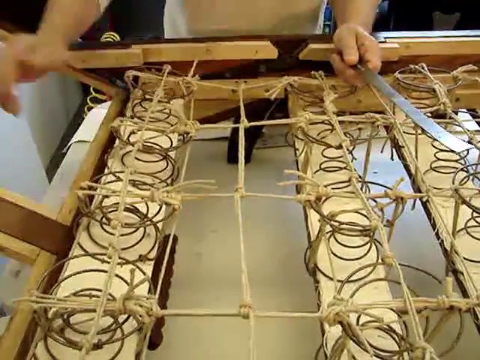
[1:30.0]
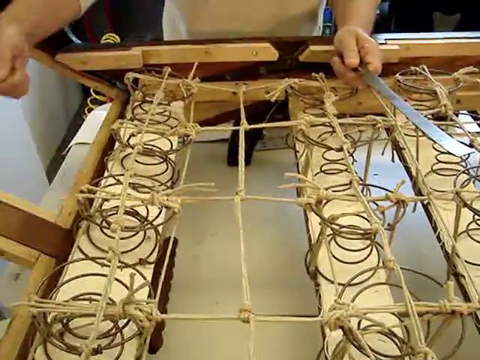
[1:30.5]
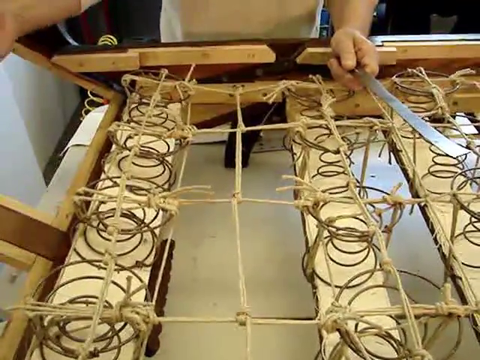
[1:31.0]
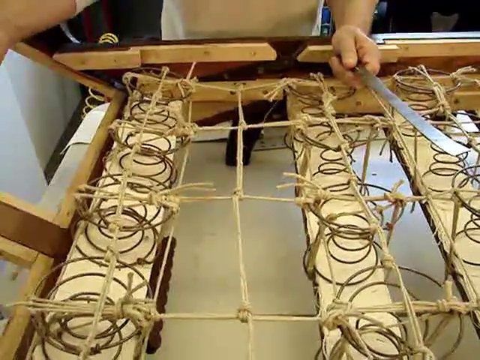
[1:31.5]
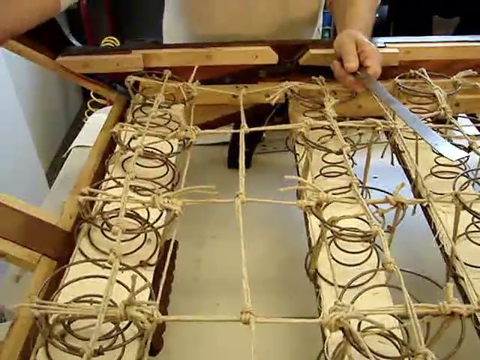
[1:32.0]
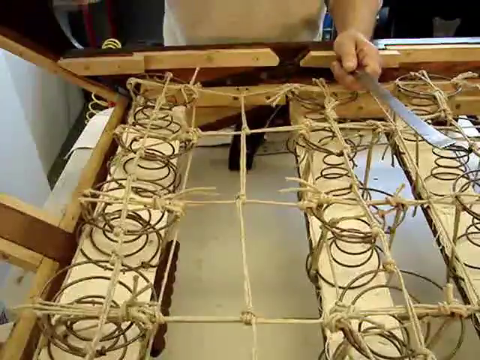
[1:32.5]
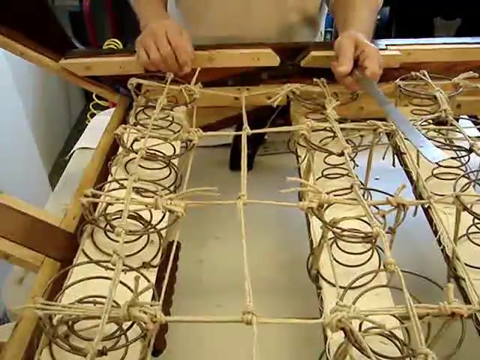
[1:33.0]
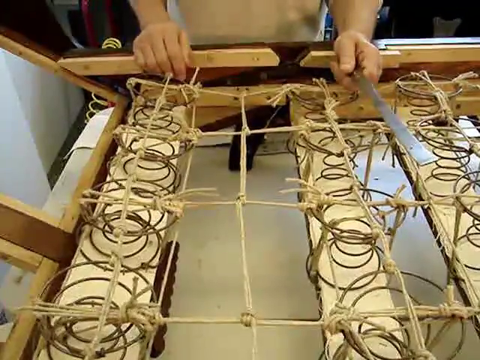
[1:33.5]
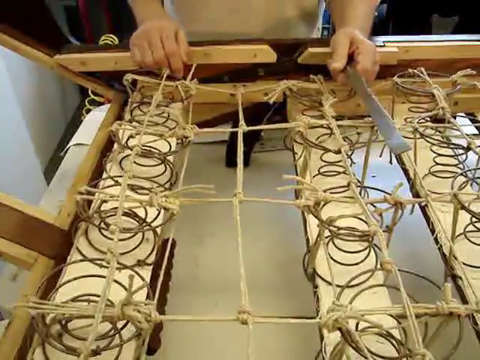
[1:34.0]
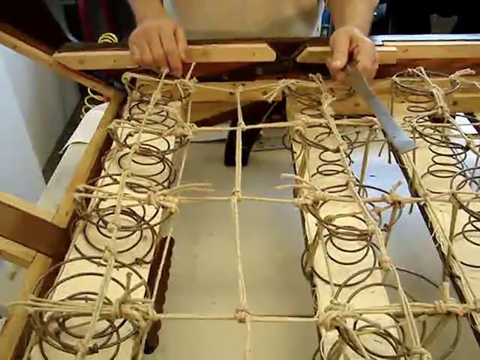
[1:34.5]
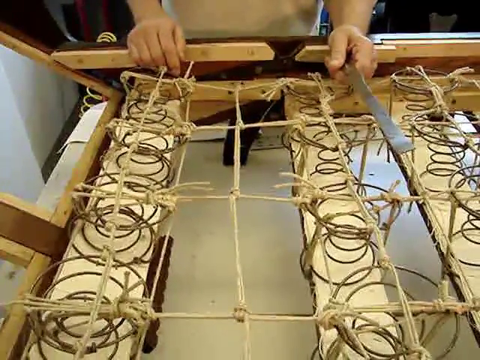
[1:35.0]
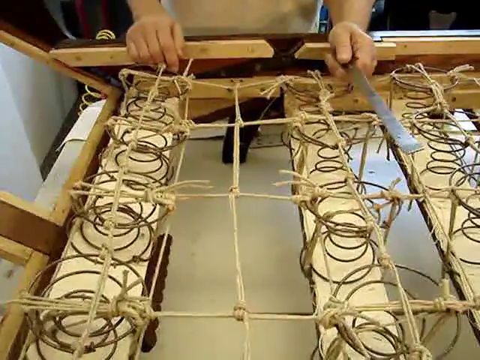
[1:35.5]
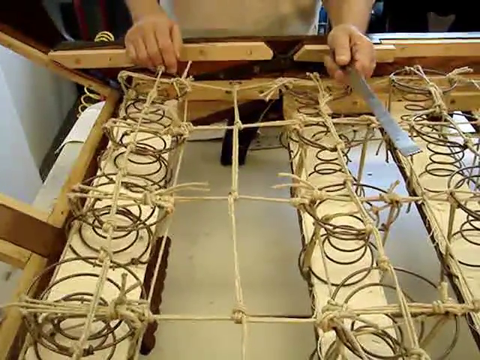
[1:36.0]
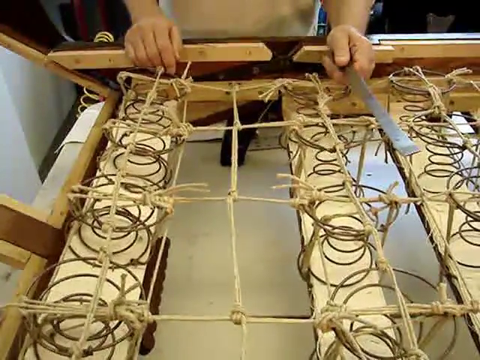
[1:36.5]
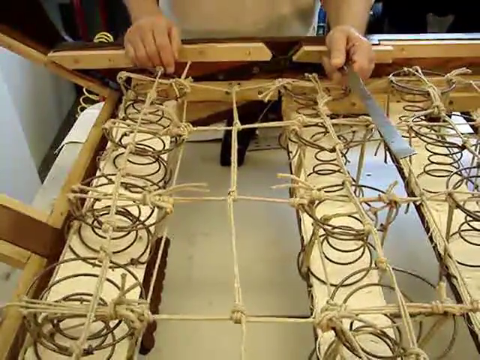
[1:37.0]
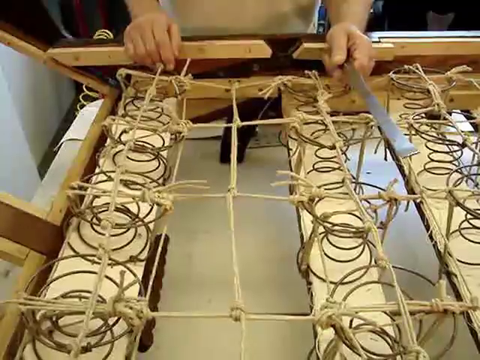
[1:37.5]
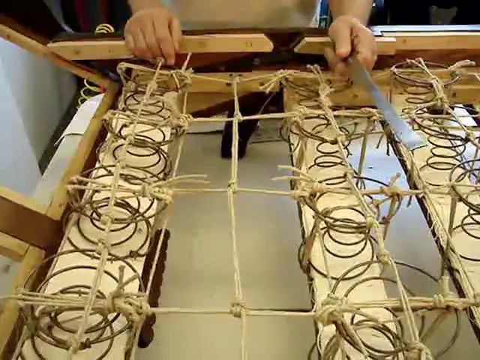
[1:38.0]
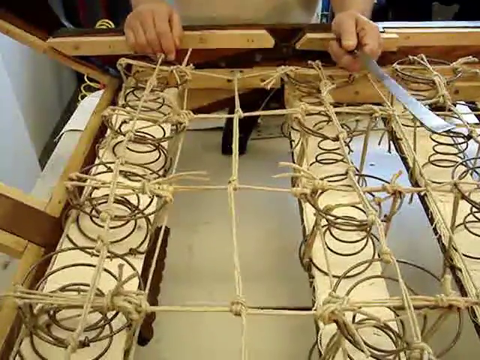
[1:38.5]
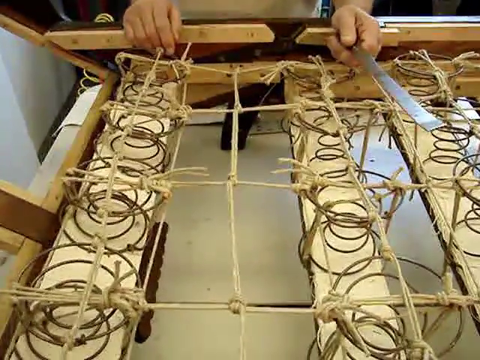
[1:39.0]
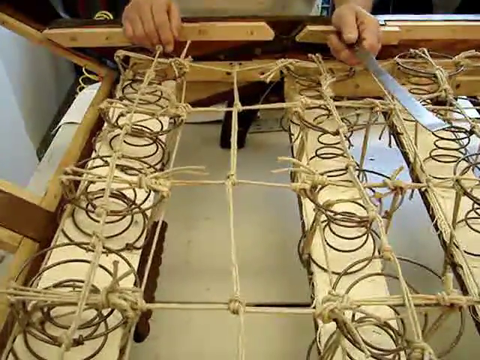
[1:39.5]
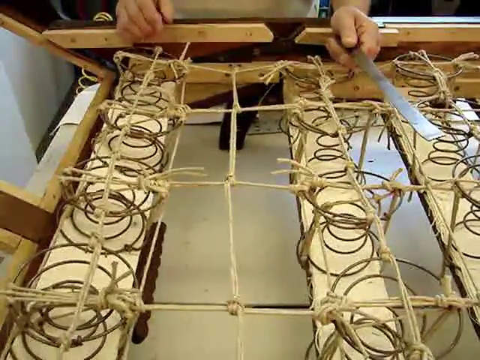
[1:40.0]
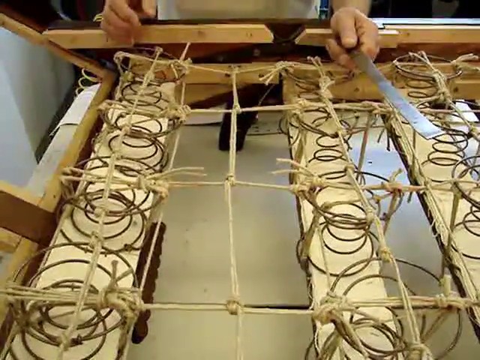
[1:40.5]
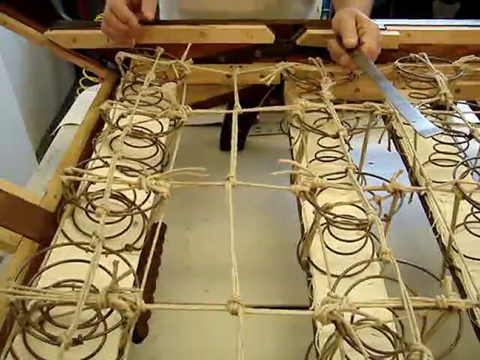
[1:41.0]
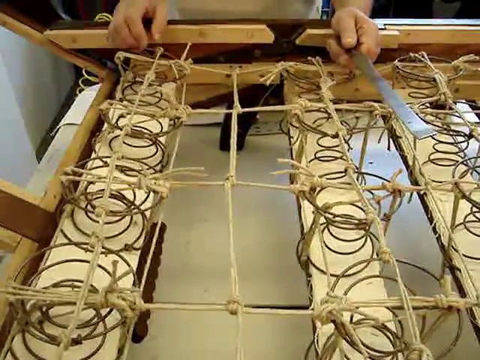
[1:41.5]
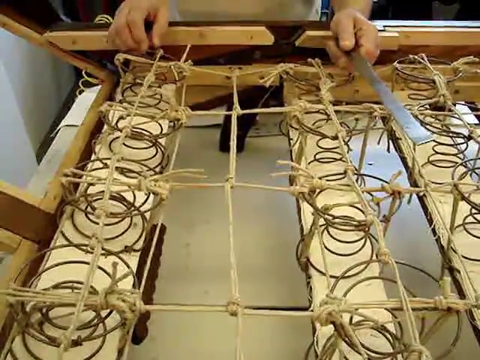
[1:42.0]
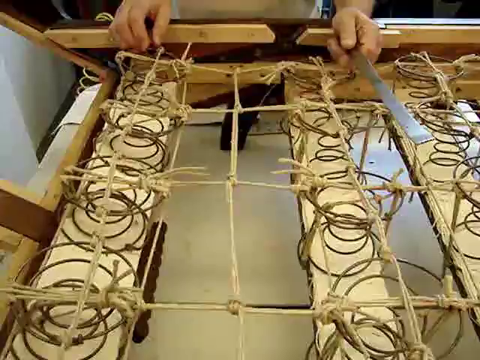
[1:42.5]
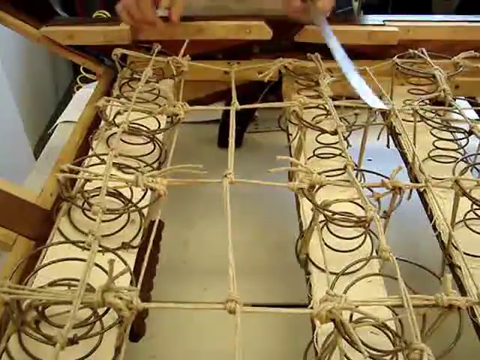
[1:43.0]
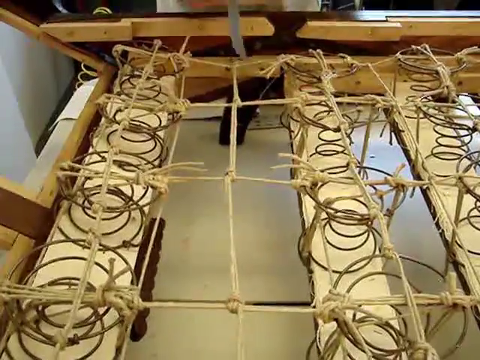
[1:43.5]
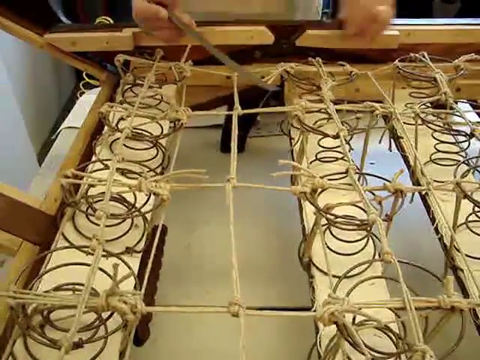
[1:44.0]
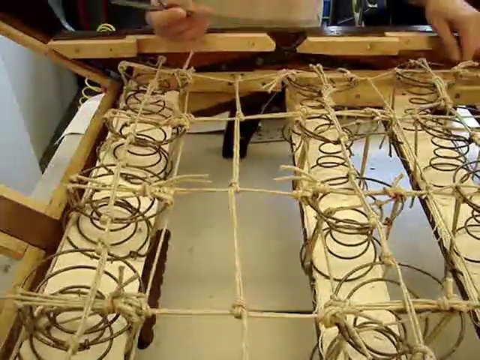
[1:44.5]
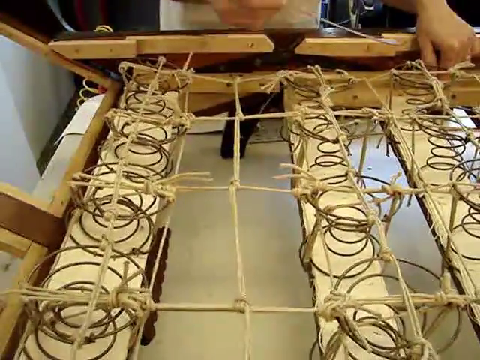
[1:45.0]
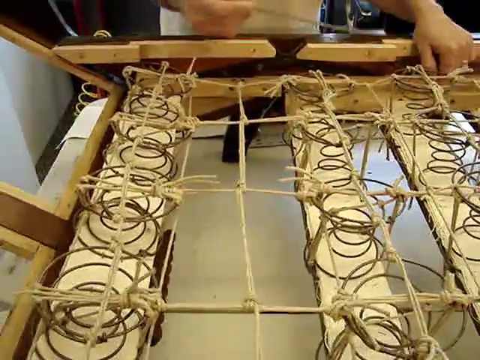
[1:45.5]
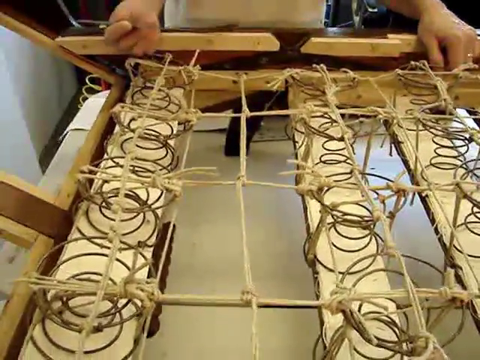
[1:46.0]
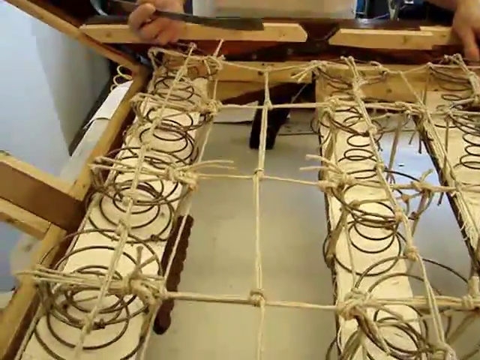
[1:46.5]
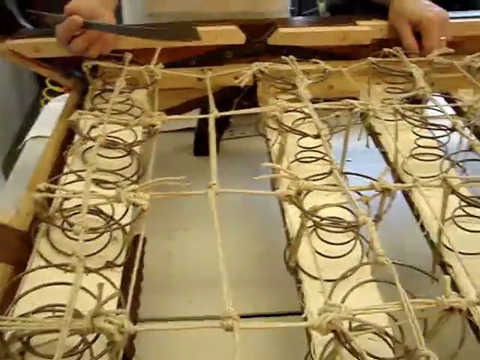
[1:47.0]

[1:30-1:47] The man is still with his wooden structure, which has springs on top and something tied on top of the springs. It seems to be like a base bed. He keeps showing how strong the structure is by holding tightly on top of it.